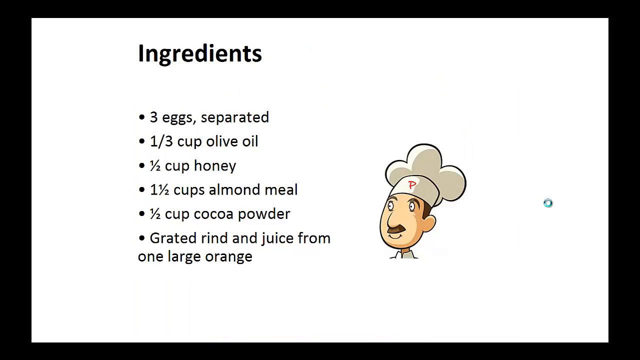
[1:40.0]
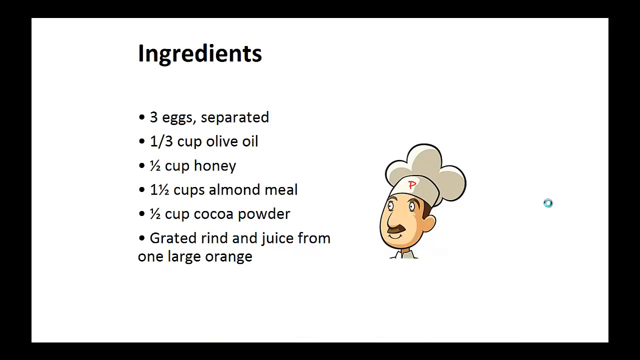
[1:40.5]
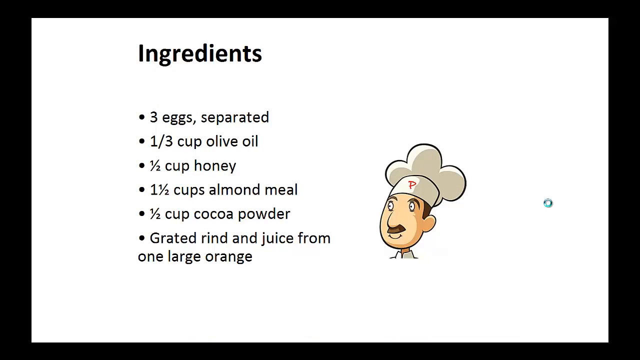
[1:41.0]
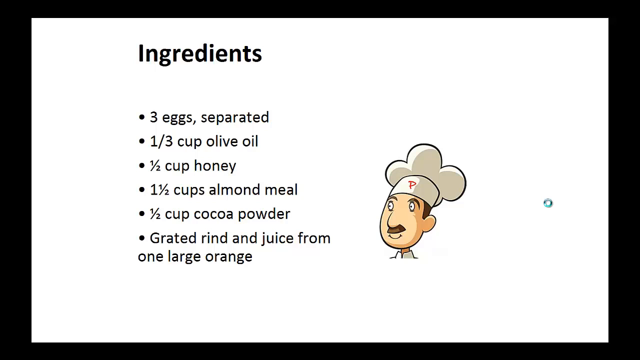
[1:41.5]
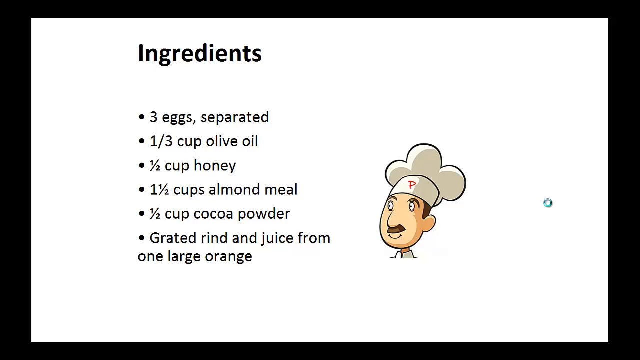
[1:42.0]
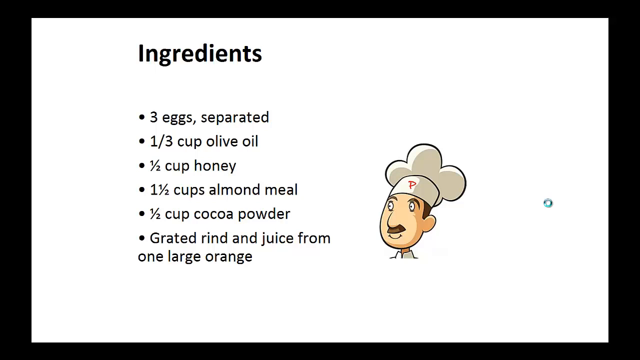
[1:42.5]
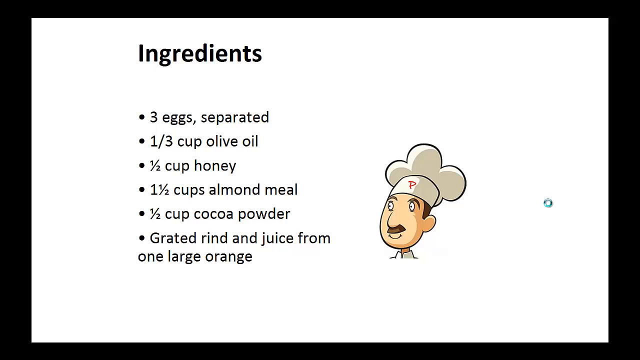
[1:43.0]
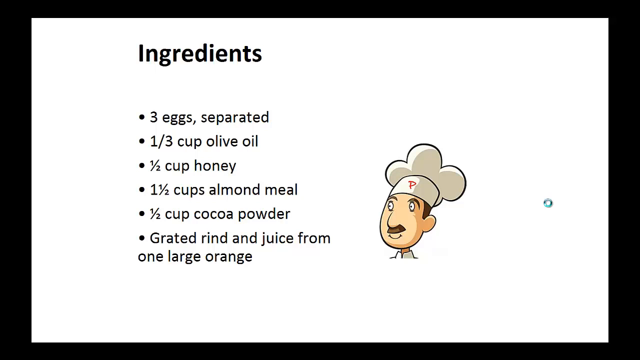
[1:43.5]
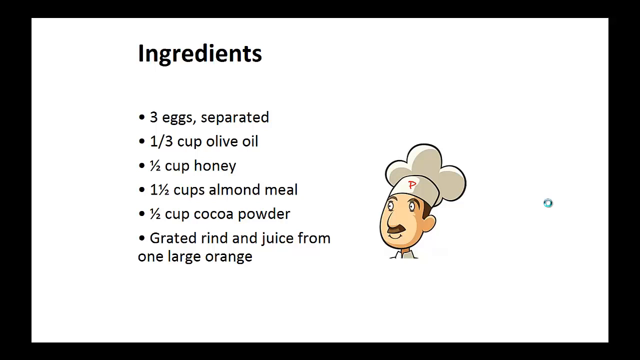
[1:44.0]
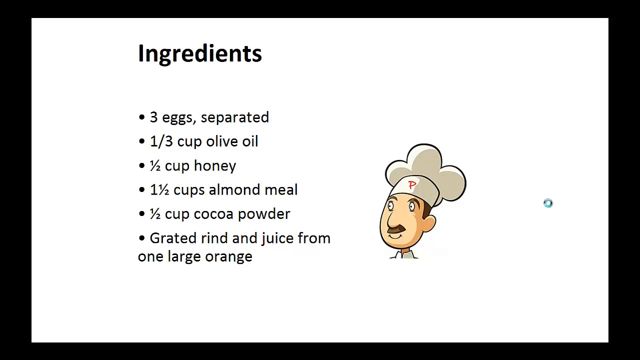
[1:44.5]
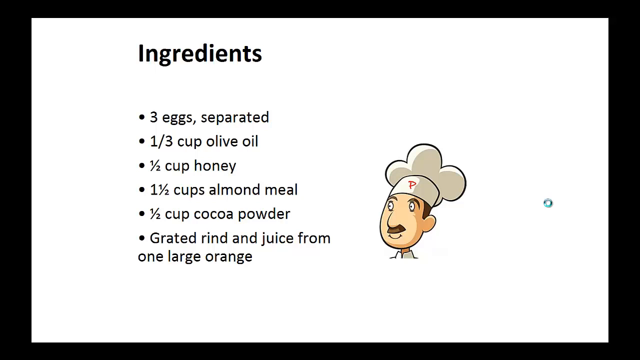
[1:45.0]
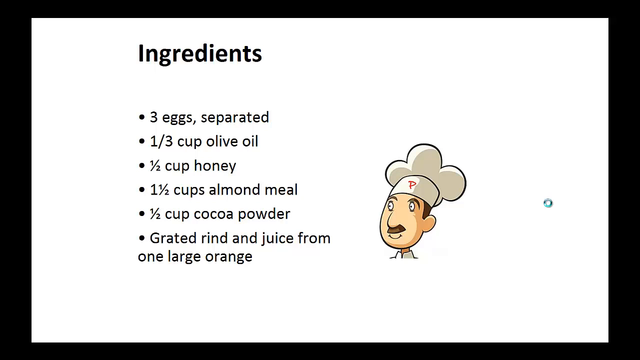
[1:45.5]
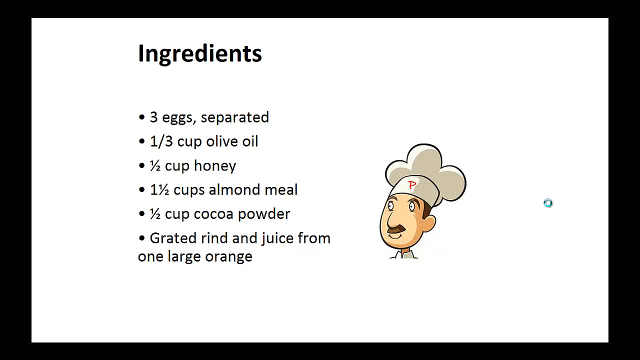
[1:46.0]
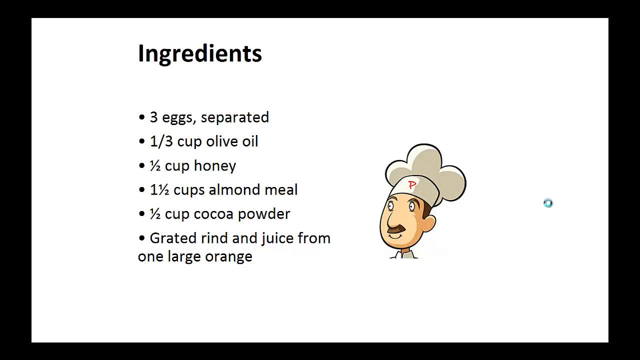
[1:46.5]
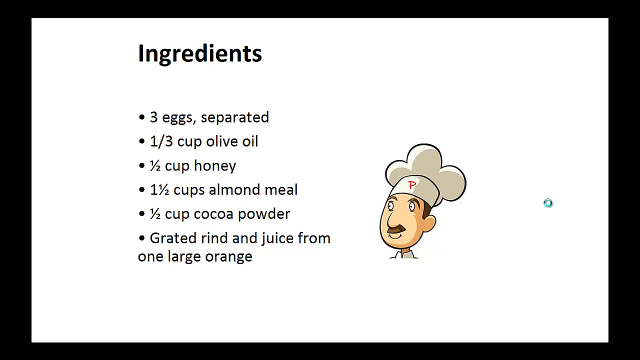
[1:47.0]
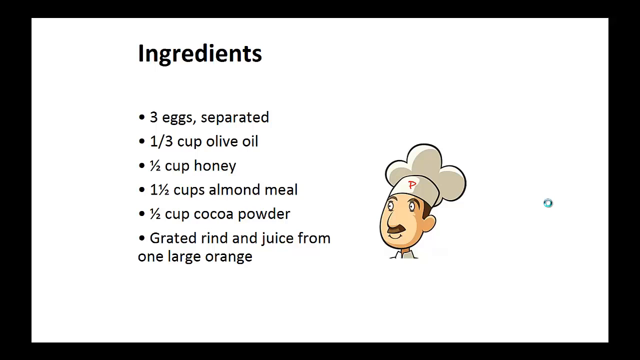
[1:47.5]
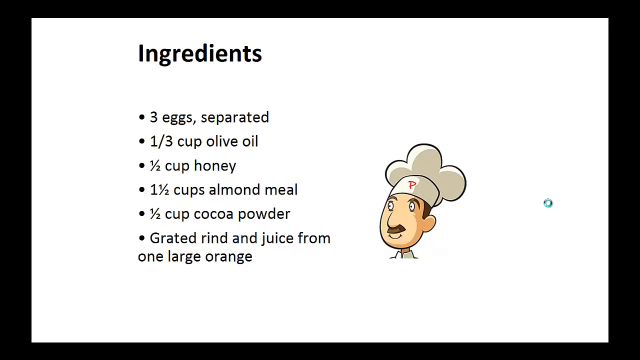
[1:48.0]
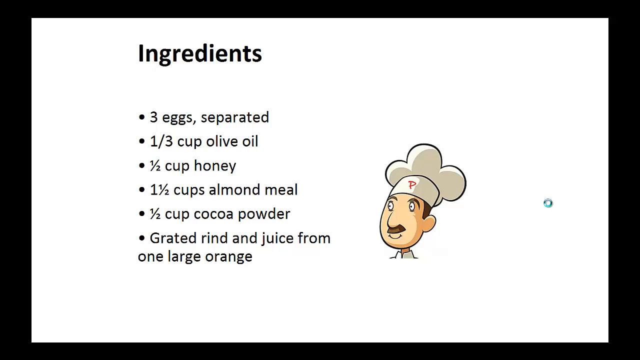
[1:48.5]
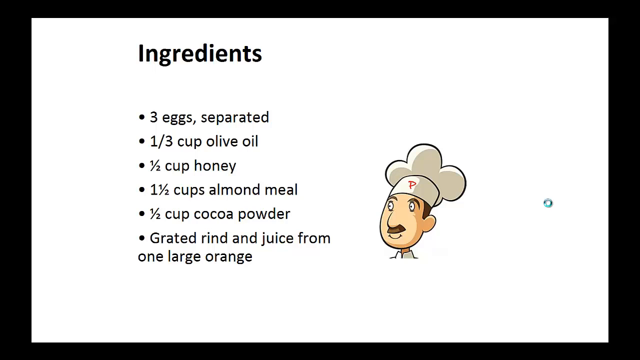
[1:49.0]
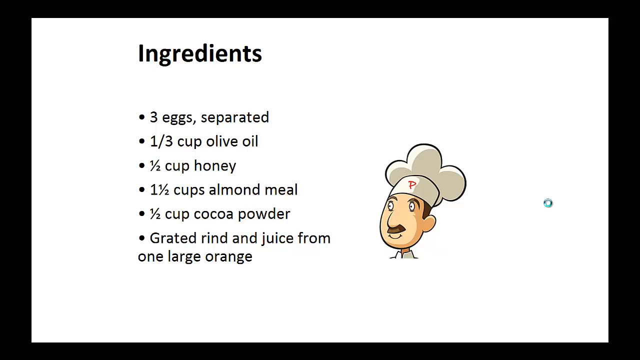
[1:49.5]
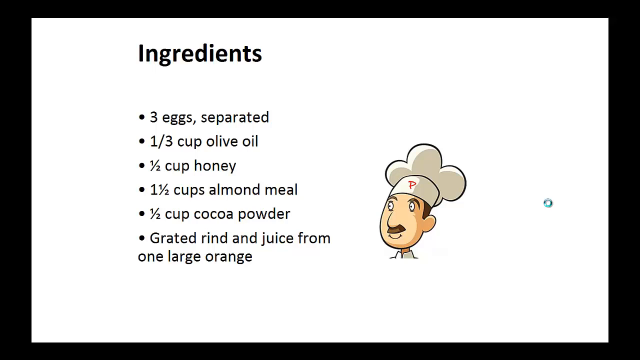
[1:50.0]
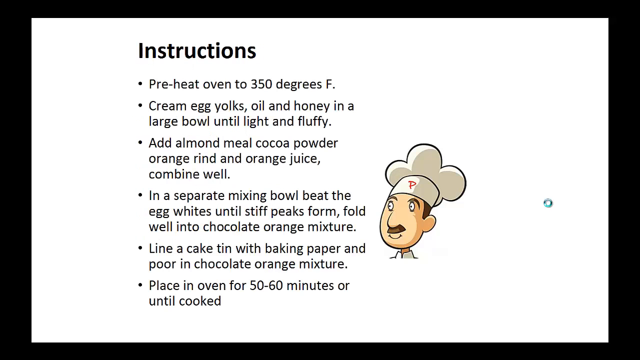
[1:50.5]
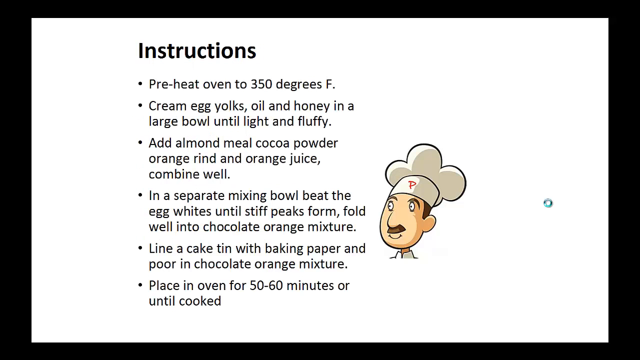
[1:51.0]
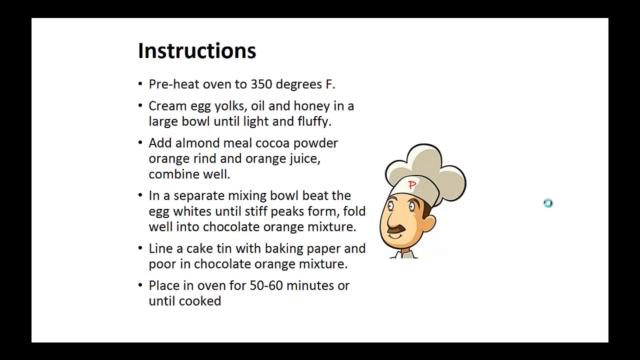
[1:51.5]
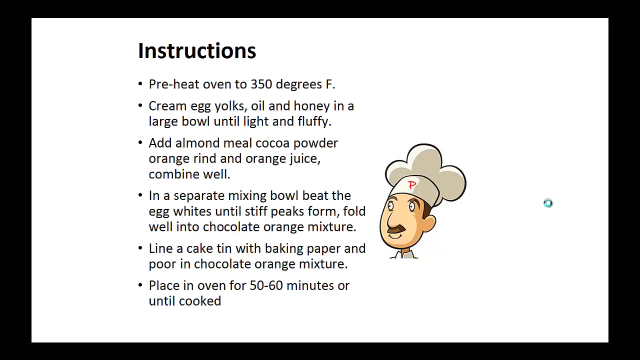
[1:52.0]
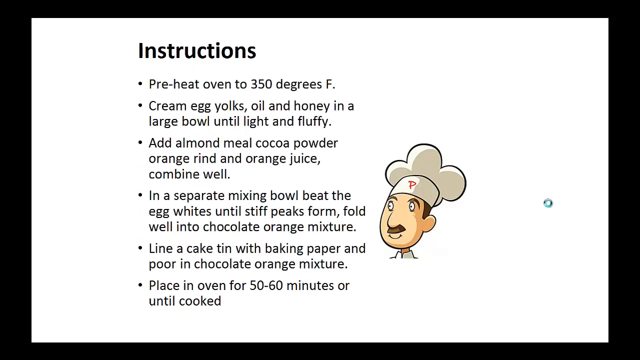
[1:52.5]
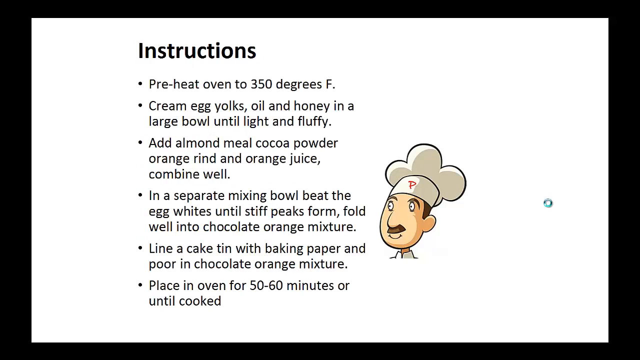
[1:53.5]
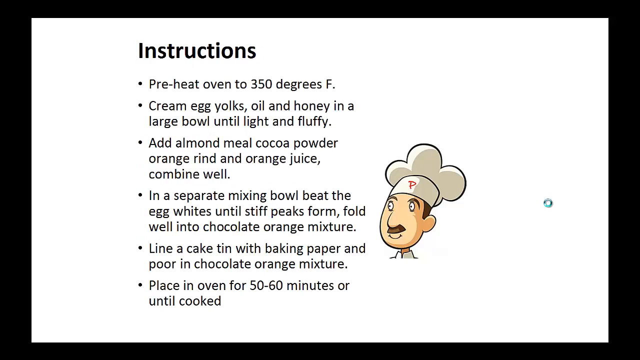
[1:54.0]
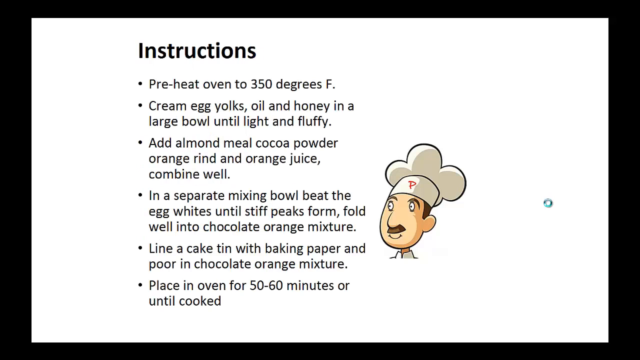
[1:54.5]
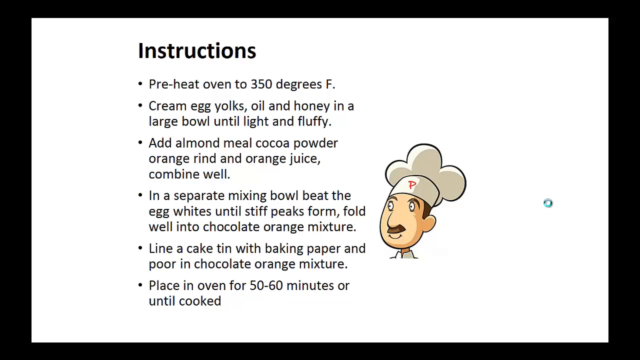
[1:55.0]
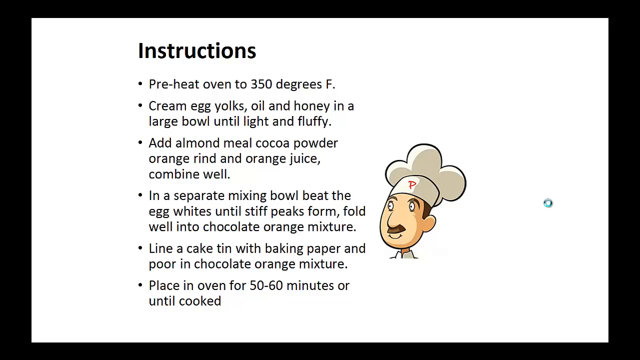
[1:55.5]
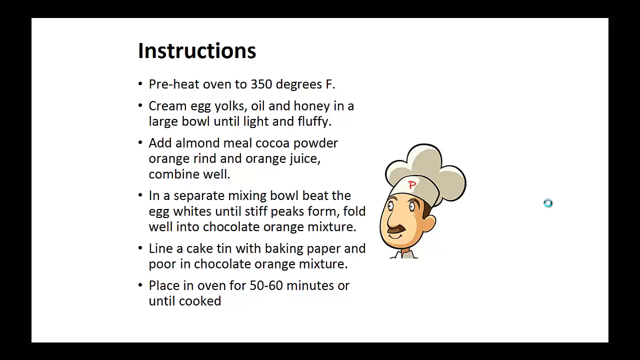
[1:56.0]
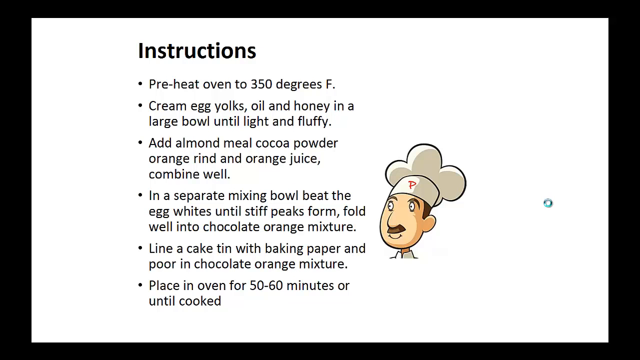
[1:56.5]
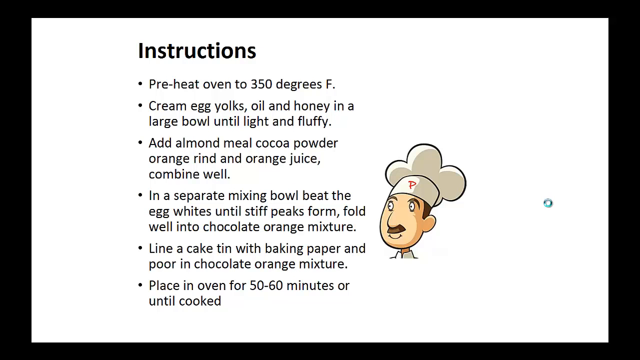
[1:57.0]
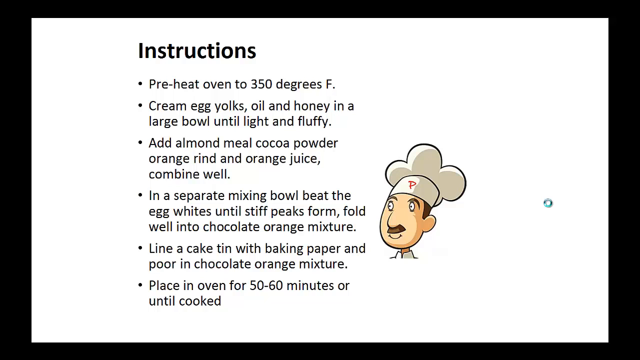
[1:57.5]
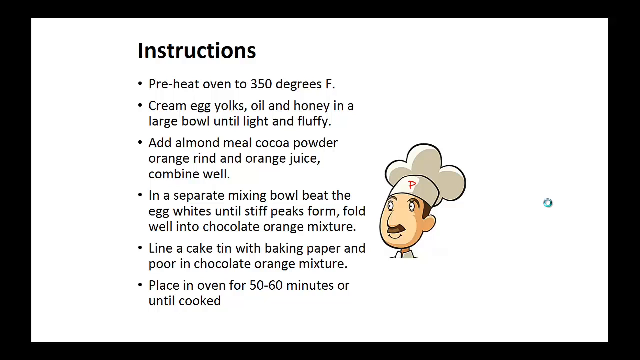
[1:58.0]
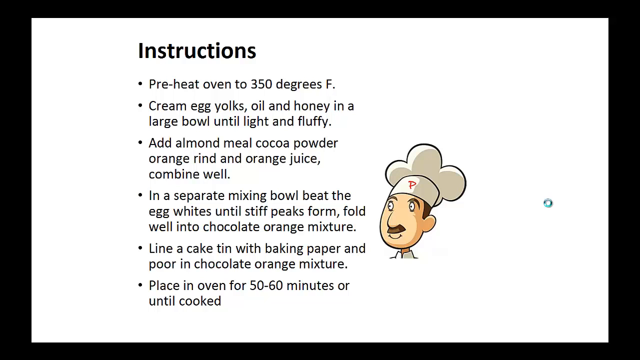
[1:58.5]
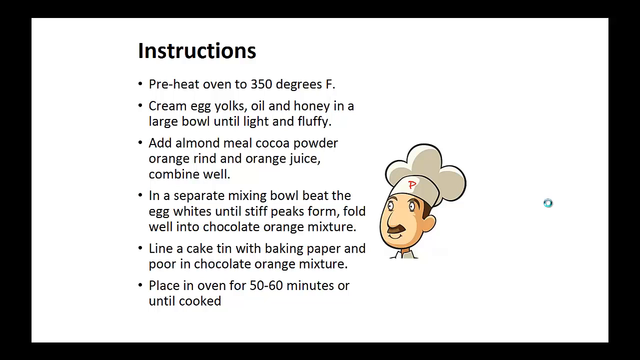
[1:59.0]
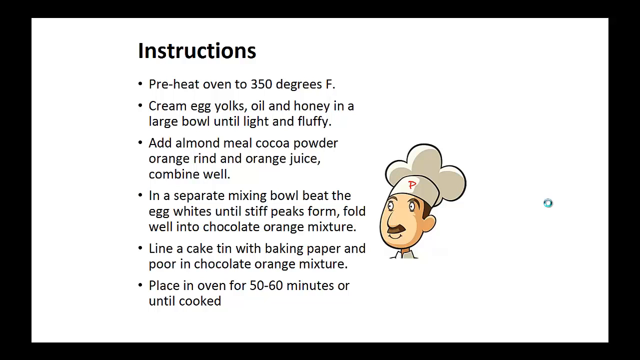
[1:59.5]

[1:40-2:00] A new frame appears with a white background. The stray green circle is still on the right side of the image. The white border is gone, but the black border remains around what is now a central white background. At the top, just to the left of centre, in thick dark font, is "ingredients", followed by a list: bullet point "three eggs separated", bullet point "one third cup olive oil", bullet point "one half cup honey", then "one and a half cups almond meal", bullet point "half cup cocoa powder", and bullet point "grated rind and juice from one large orange". To the right of the ingredients is a cartoon image of a chef wearing a typical chef's hat with an extended top; he has brown hair and a moustache, the collar of chef's whites around his neck, and a red "P" in the centre of the rim of his hat. Then cooking/baking instructions drop into the frame.